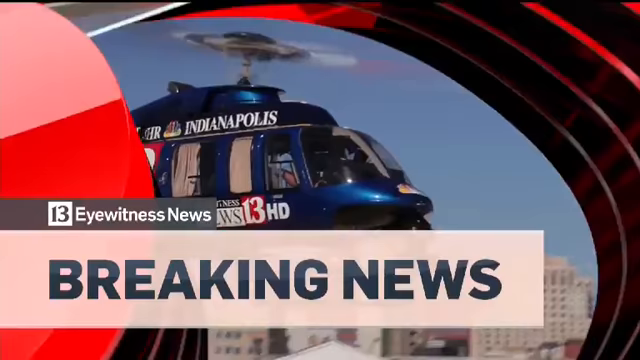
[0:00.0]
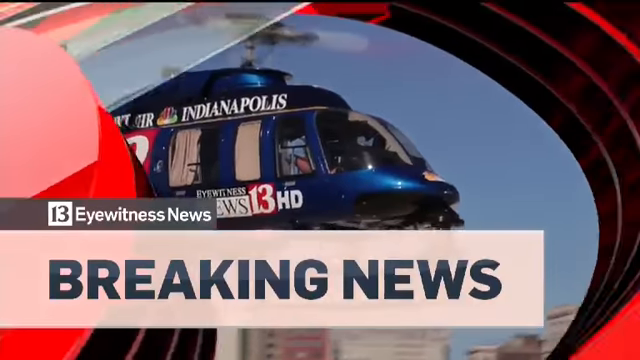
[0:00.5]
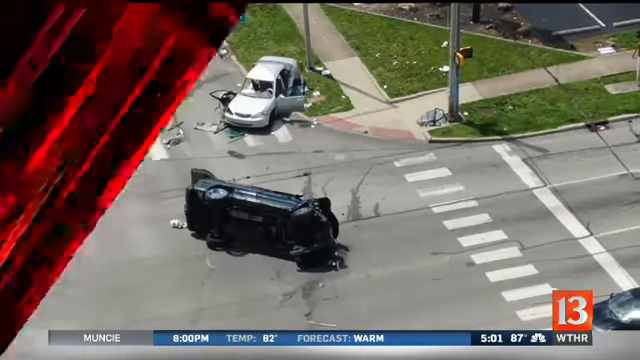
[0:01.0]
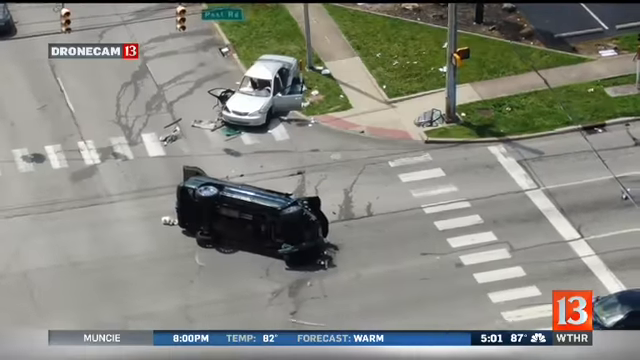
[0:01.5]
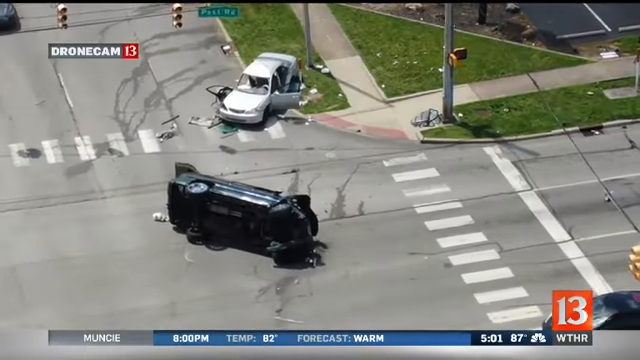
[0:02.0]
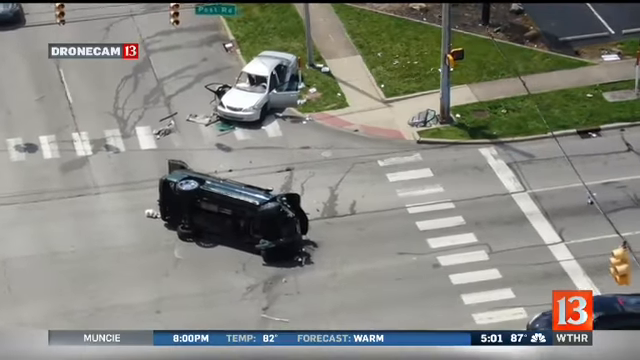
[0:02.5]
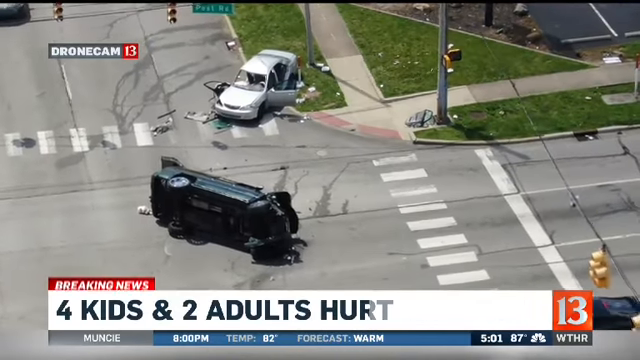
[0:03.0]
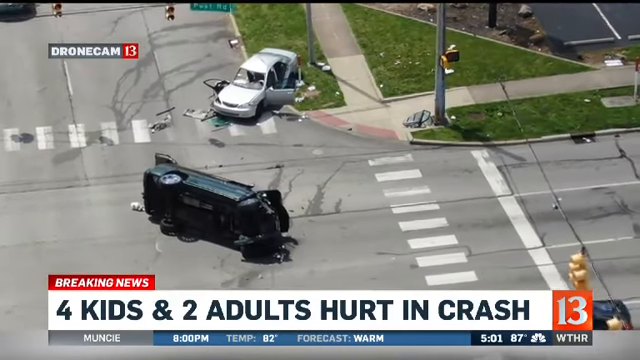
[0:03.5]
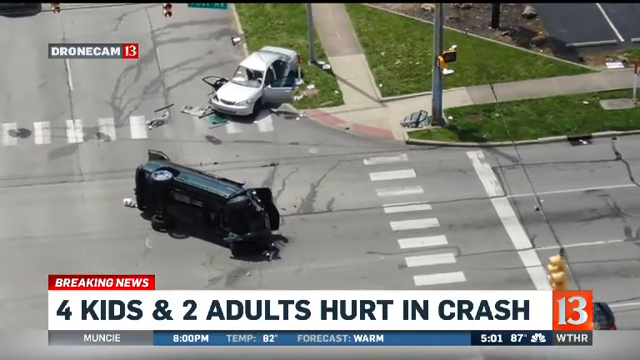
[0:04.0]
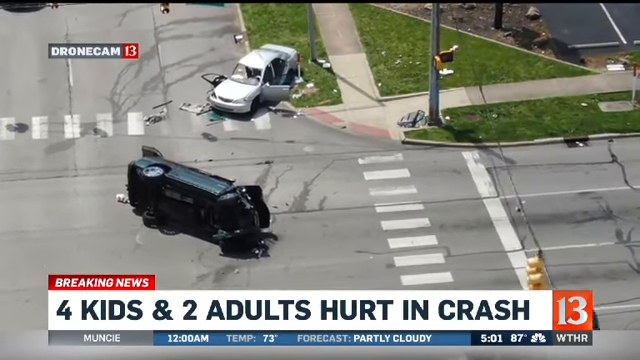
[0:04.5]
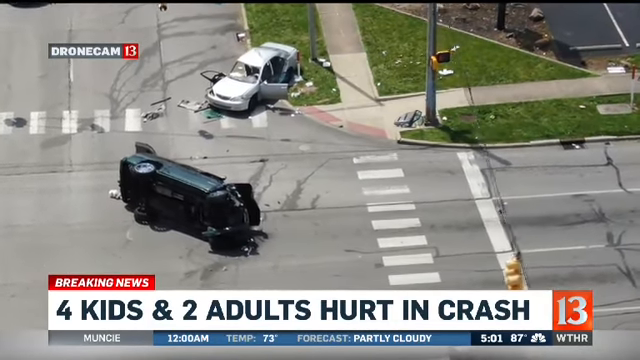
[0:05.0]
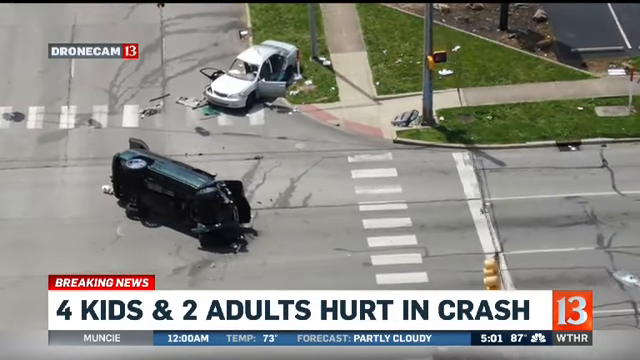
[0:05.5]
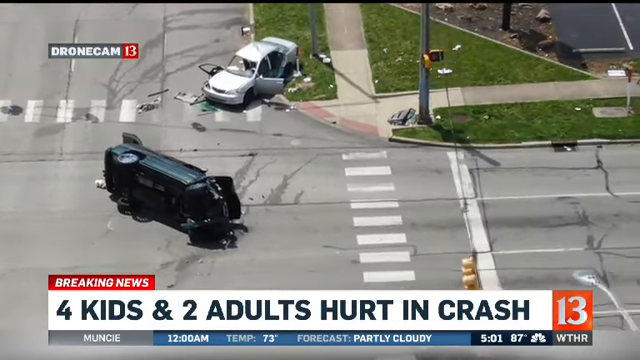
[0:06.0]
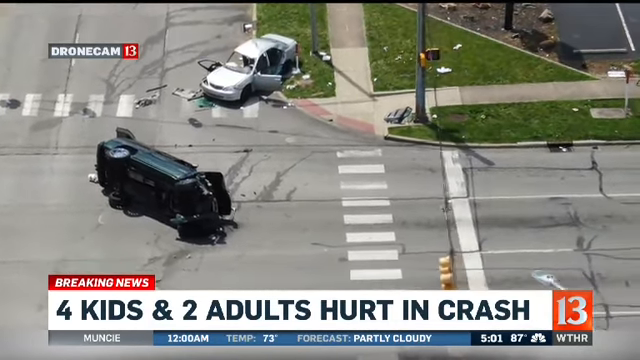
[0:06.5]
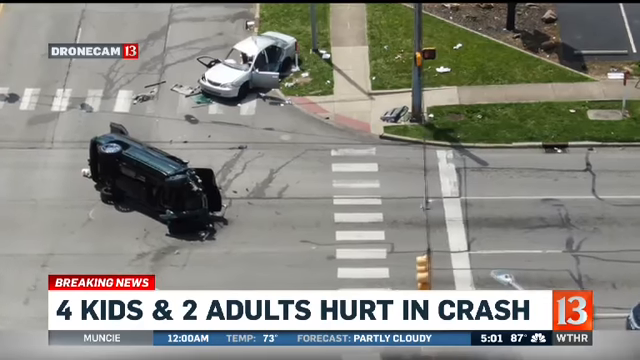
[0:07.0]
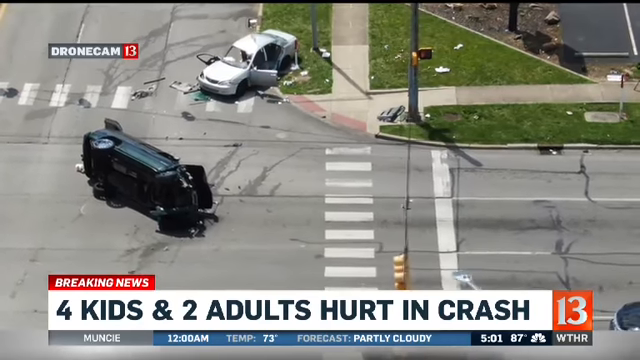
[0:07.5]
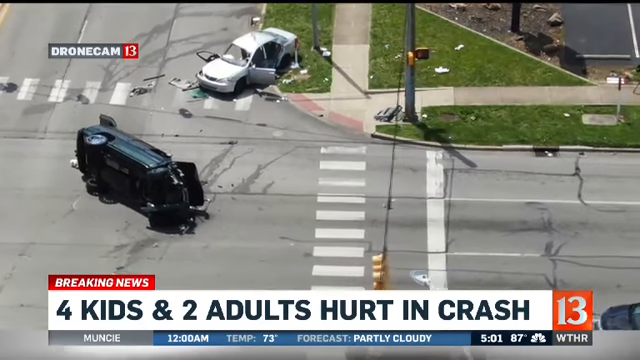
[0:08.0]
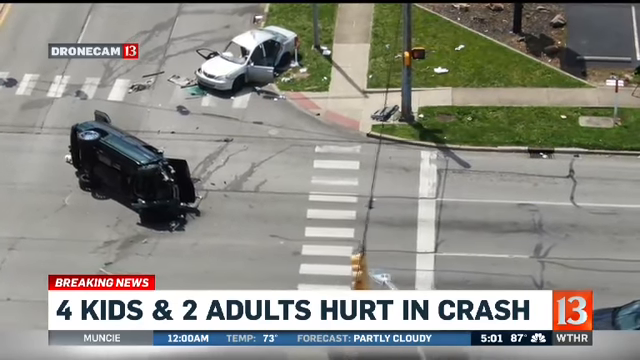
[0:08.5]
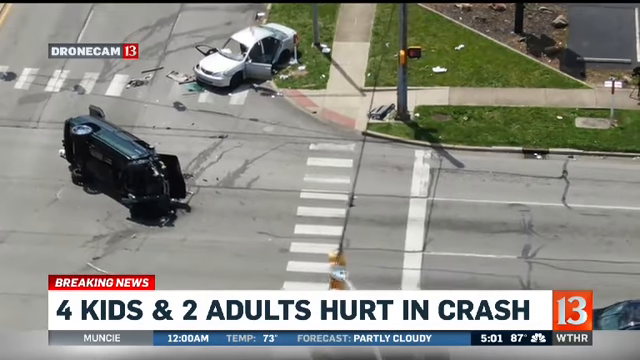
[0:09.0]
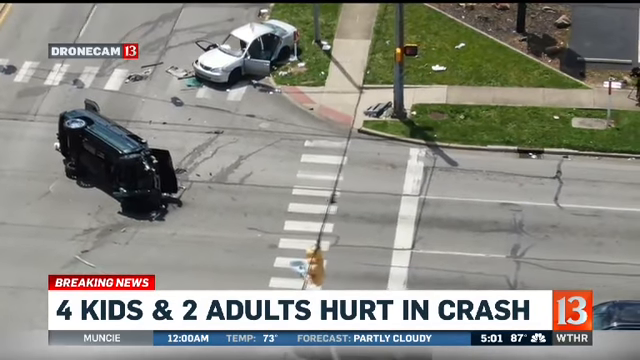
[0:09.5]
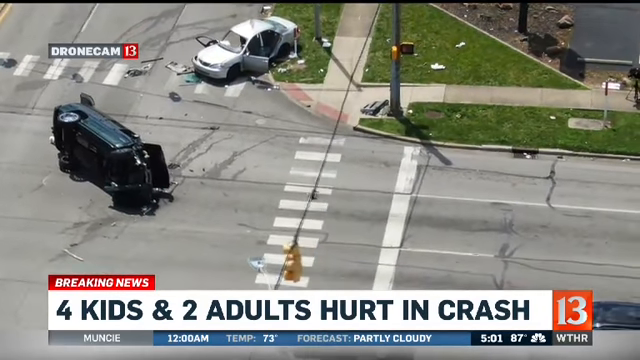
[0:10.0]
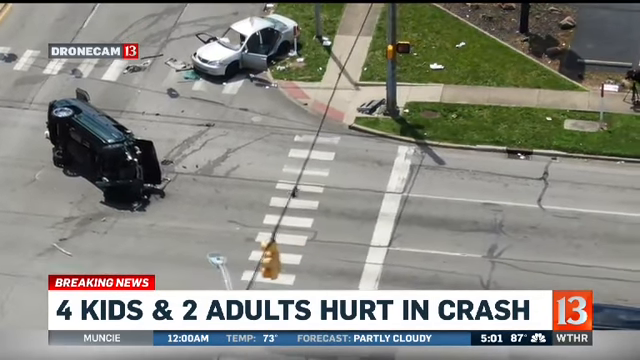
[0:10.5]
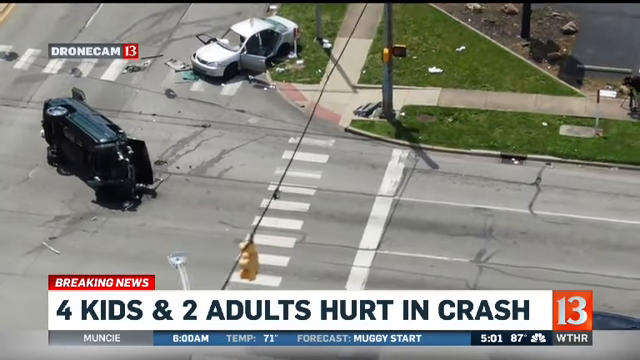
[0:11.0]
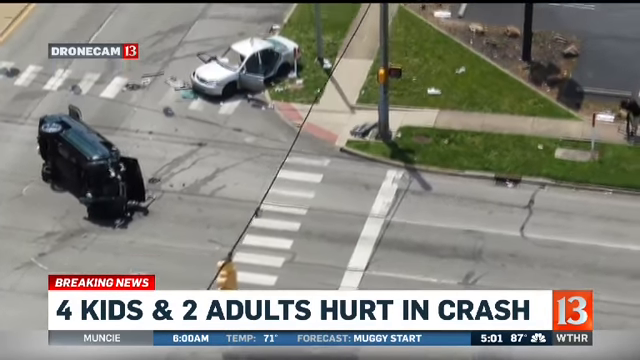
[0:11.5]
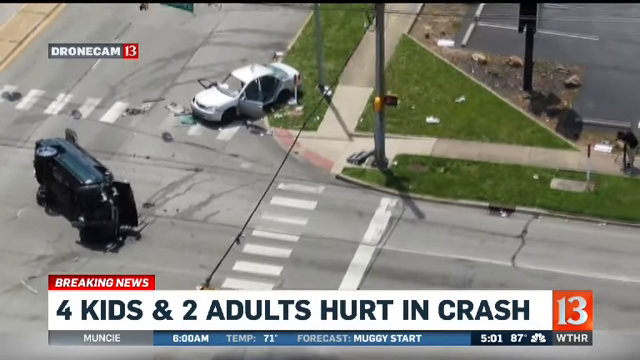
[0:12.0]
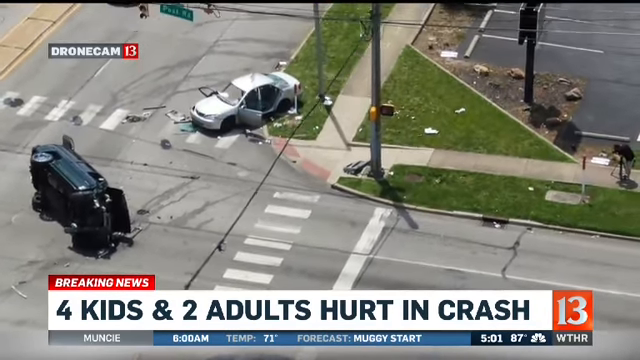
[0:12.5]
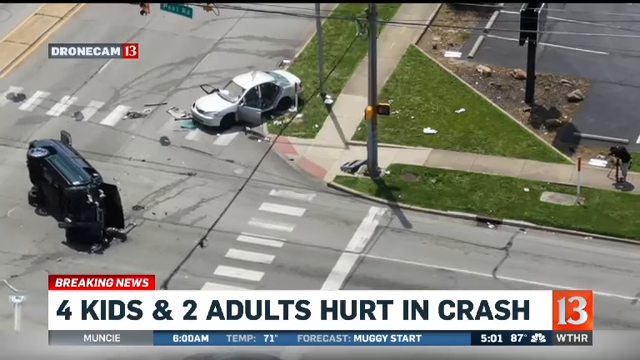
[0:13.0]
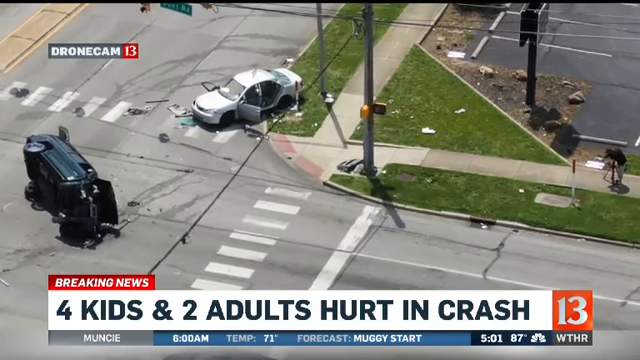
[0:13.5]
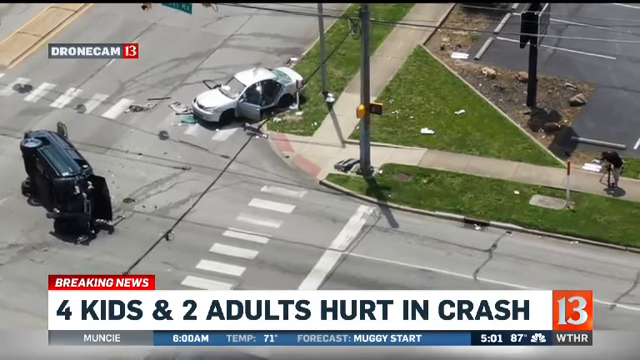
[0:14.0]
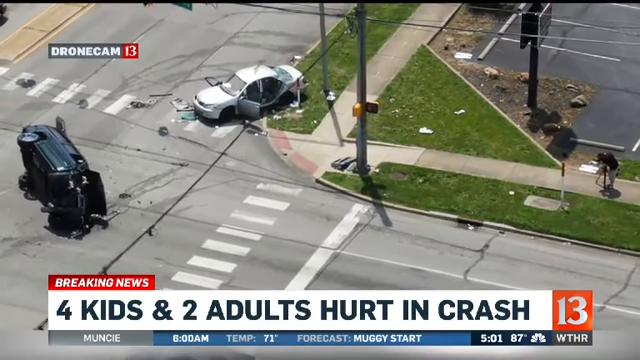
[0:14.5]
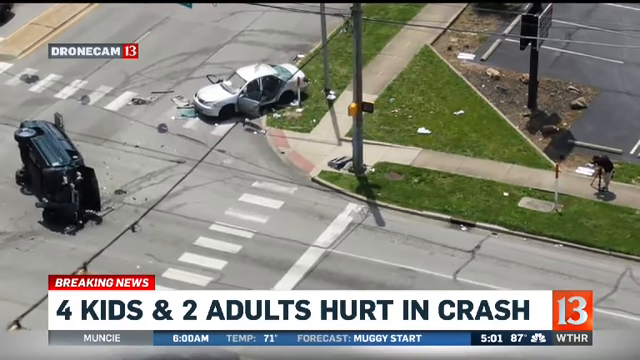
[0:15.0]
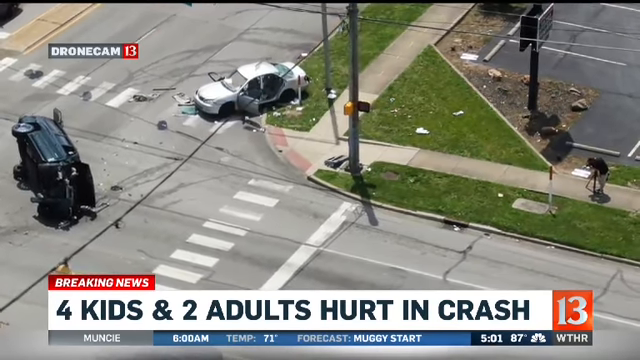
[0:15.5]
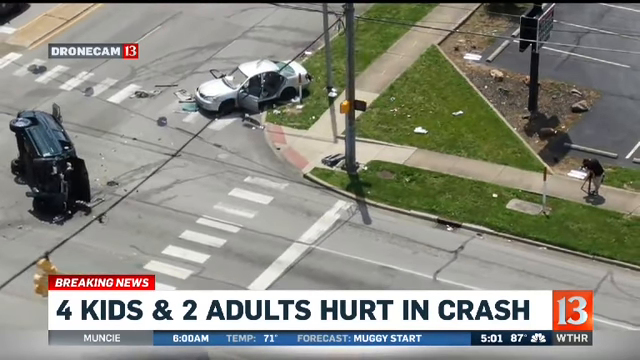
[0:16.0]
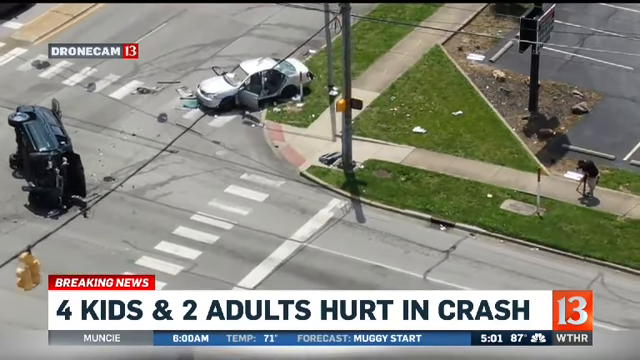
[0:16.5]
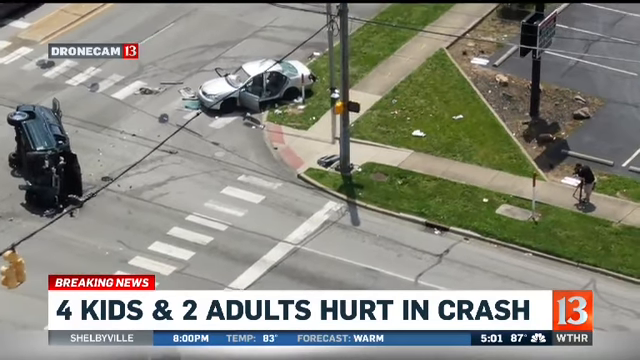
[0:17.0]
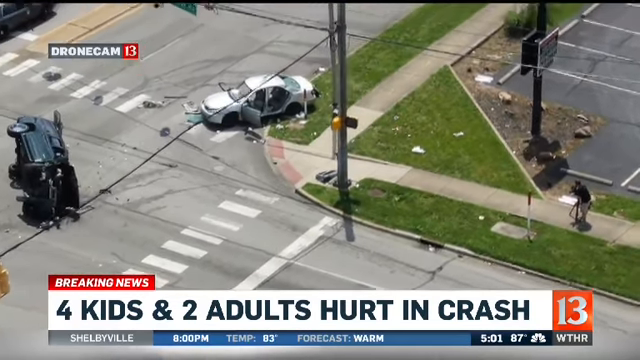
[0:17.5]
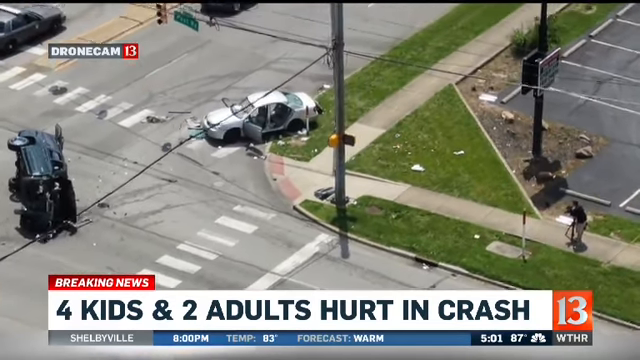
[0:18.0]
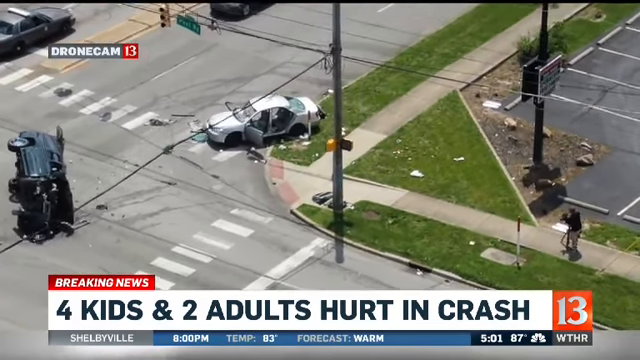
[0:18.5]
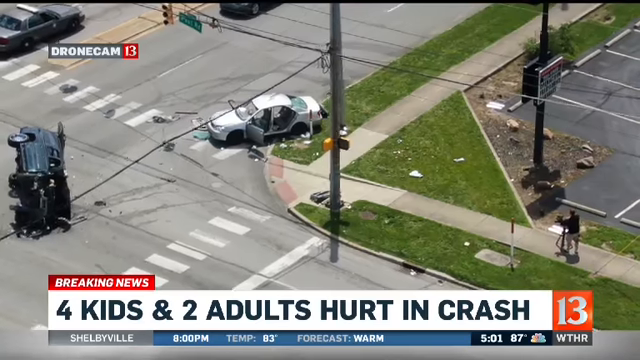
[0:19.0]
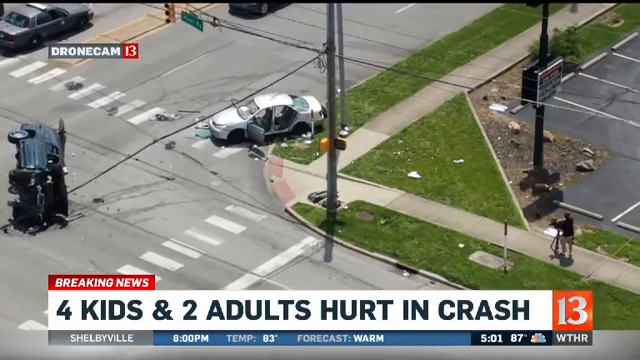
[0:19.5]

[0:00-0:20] An Eyewitness News breaking news report covers a car accident, with a helicopter in the air. On-screen text reads "four kids and two adults hurt" along with channel 13, and the time and temperature appear along the bottom. Text reading "drone cam 13" indicates the footage comes from a drone, and "Indianapolis" is also shown on screen. The crash involves a white car backed into a grass median and a black car turned on its side in the middle of the intersection. Car parts are everywhere. A man on the sidewalk is bending over; he may have been one of the victims of the accident. No one else is around.